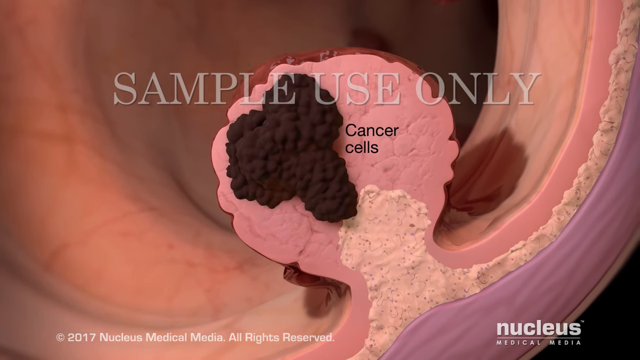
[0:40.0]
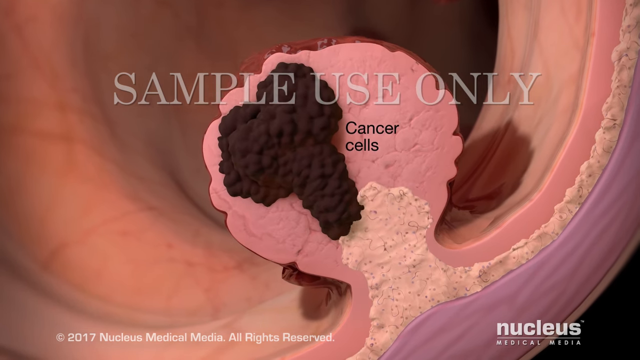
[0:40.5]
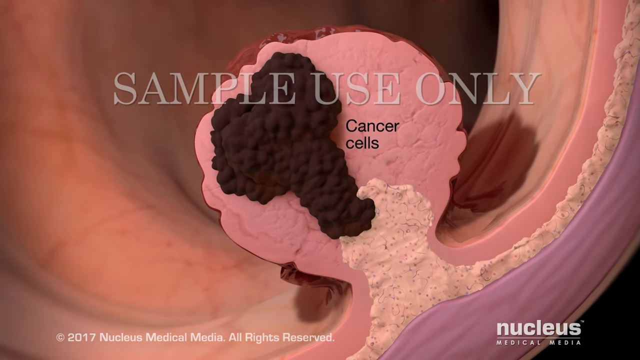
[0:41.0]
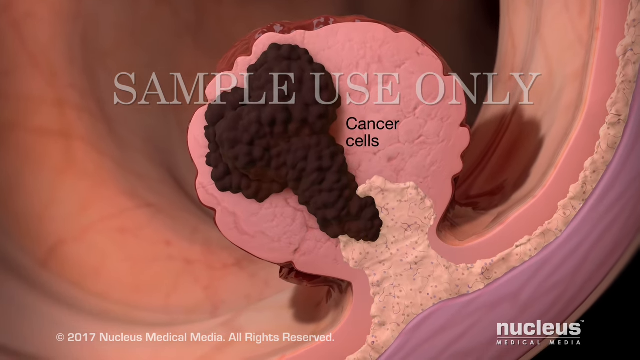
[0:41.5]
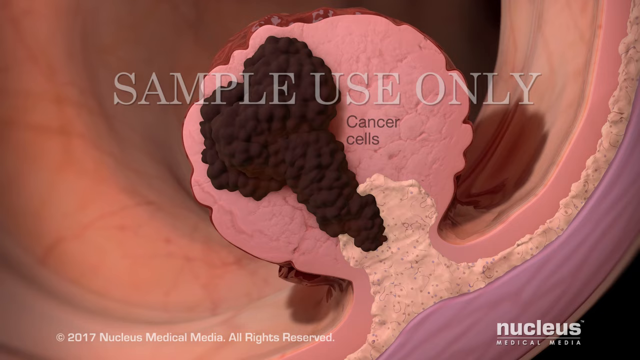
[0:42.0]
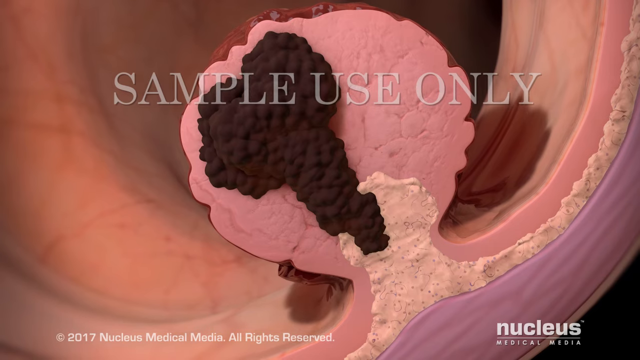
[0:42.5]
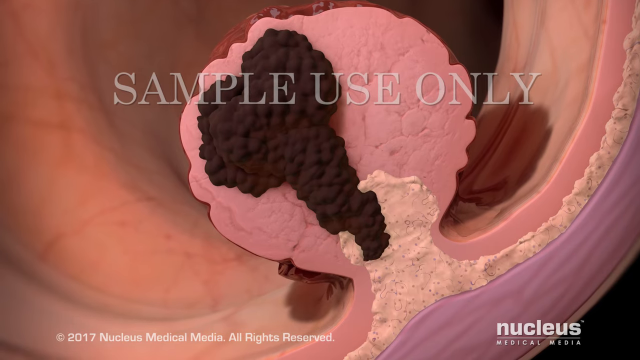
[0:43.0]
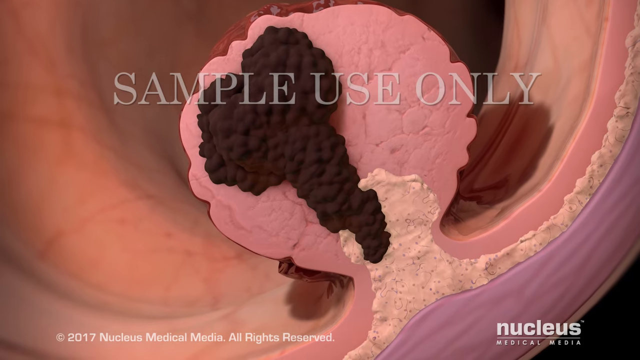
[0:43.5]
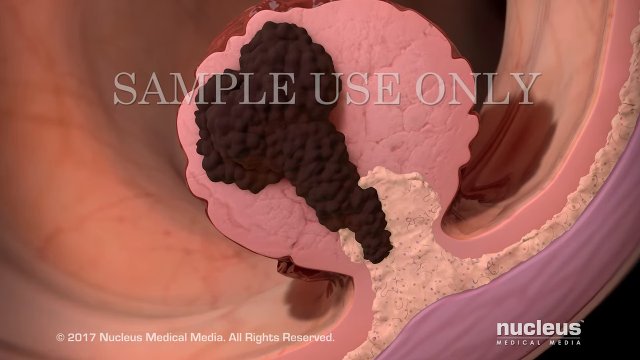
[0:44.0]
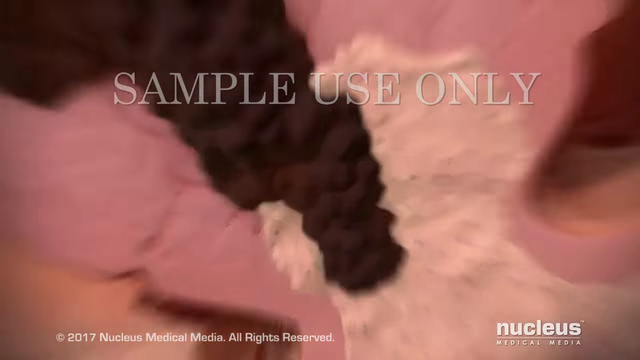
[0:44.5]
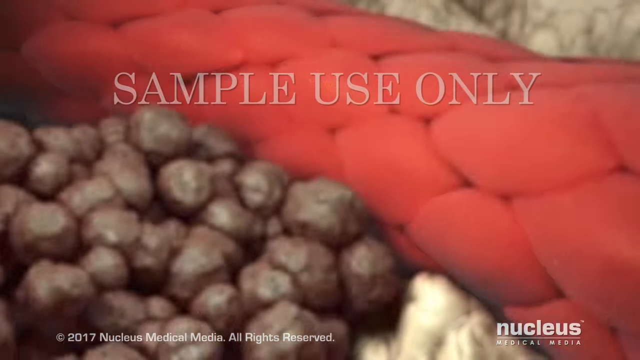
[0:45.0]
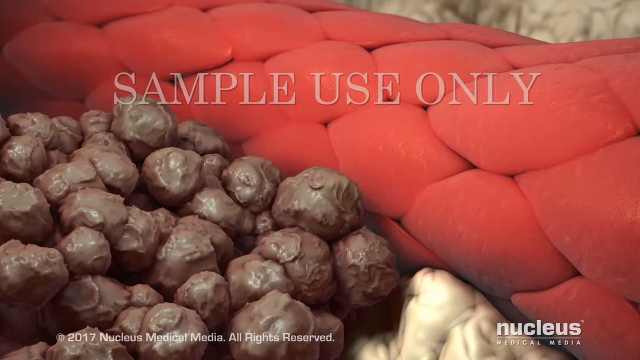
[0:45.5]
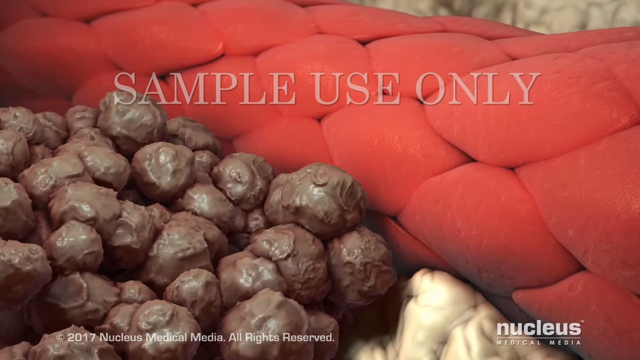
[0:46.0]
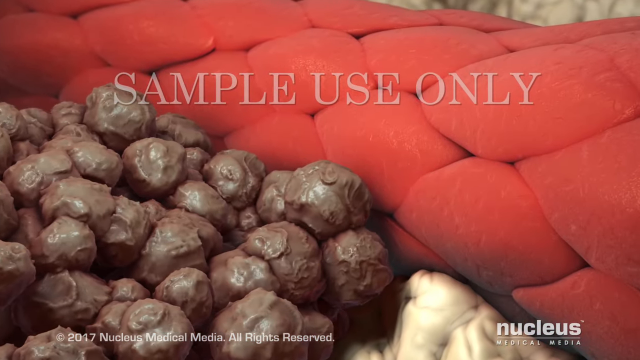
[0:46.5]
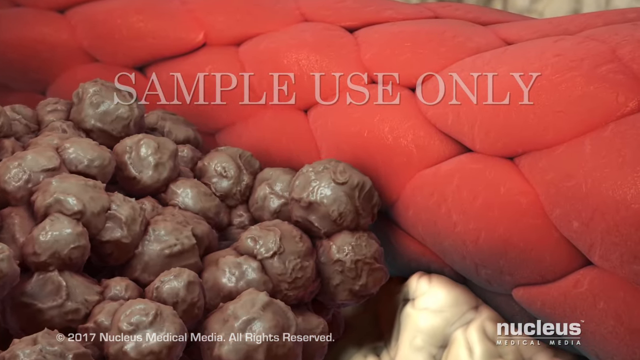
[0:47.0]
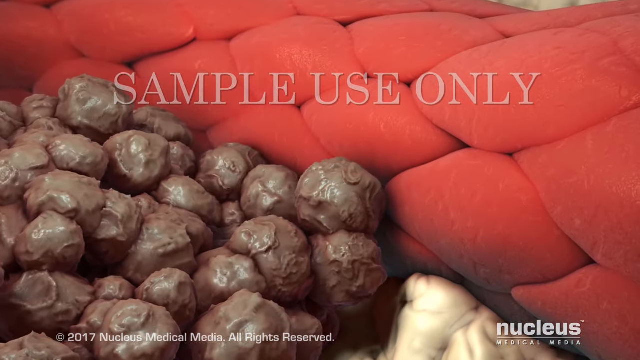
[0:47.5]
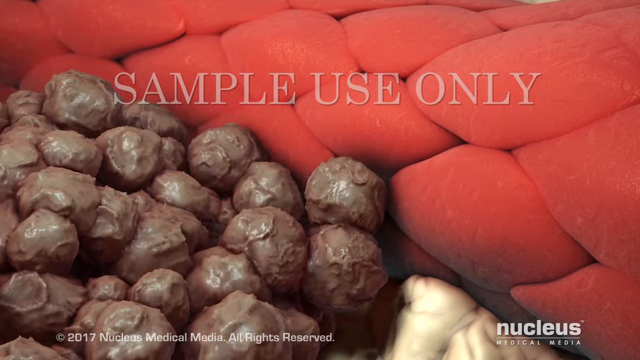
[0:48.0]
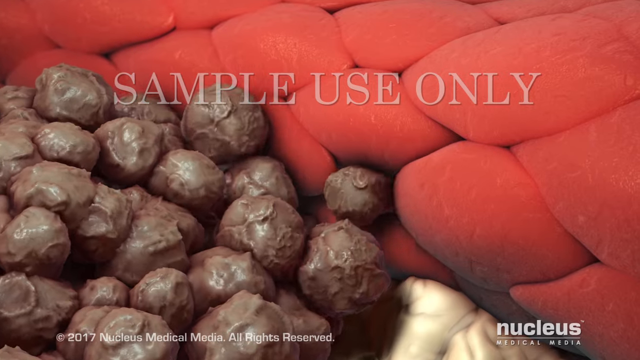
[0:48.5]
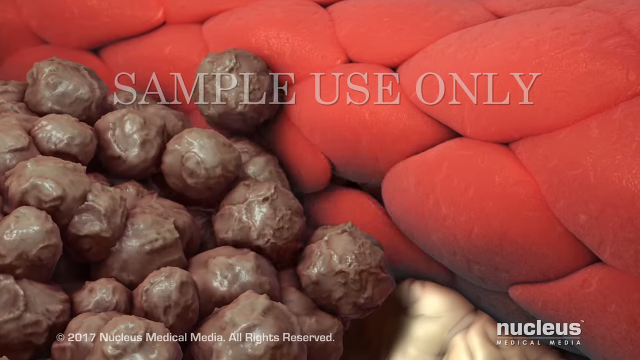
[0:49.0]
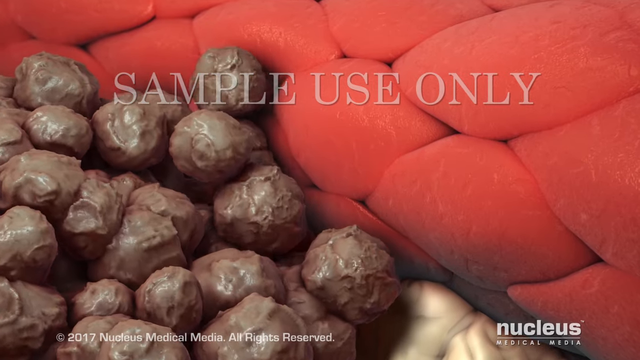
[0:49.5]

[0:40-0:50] The view is zoomed in on the inside of a polyp. The cancer cells grow rapidly and trail down into the stem of the polyp, with "sample use only" across the image. The view zooms in to show the cancer cells entering the tissue and the bloodstream, and red blood cells are visible. The cancer cells grow straight down, with the anal cavity visible in the background. "Sample use only" appears centered in gray. The sequence then abruptly ends and goes back to the original title card.